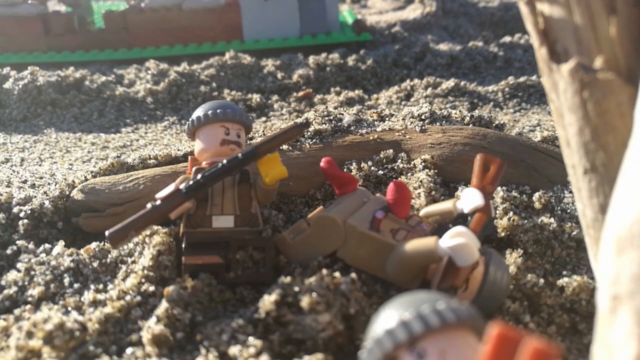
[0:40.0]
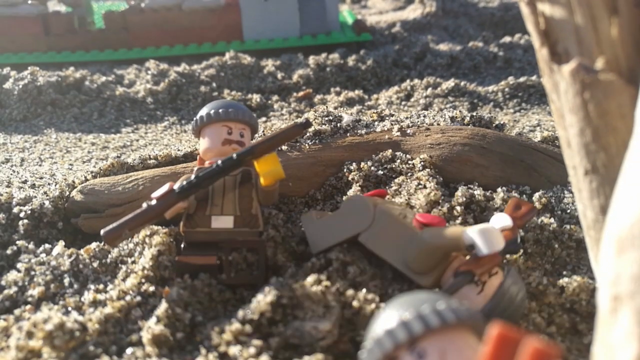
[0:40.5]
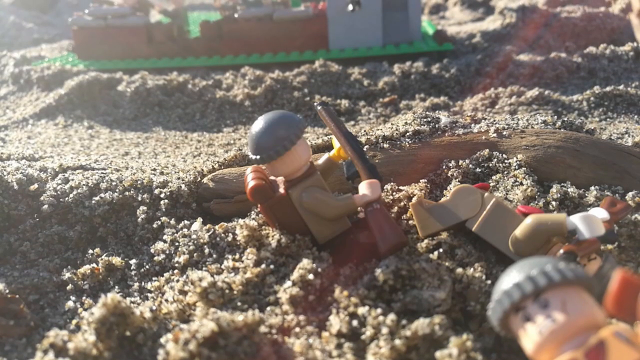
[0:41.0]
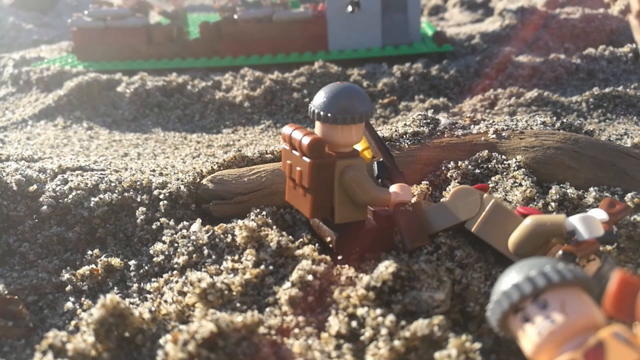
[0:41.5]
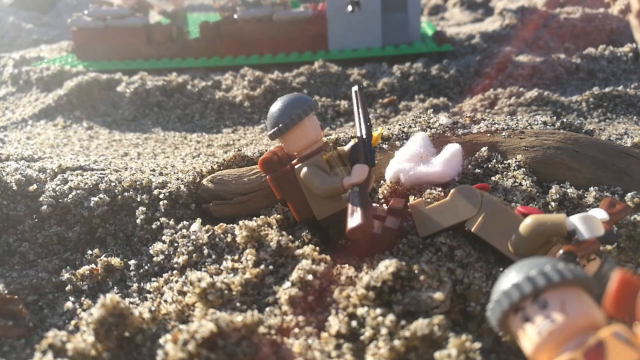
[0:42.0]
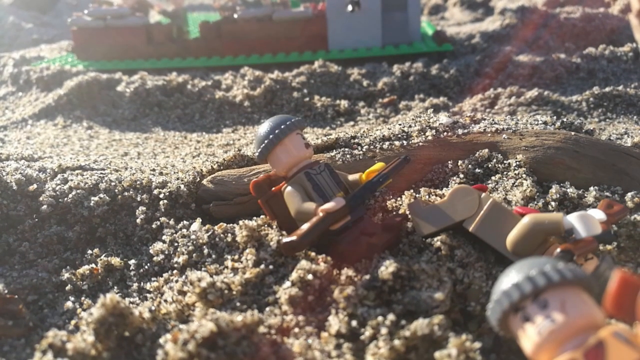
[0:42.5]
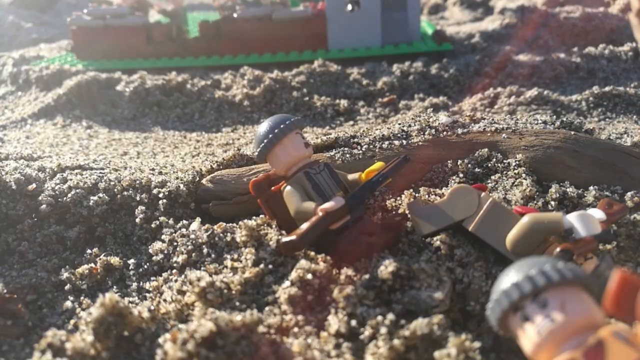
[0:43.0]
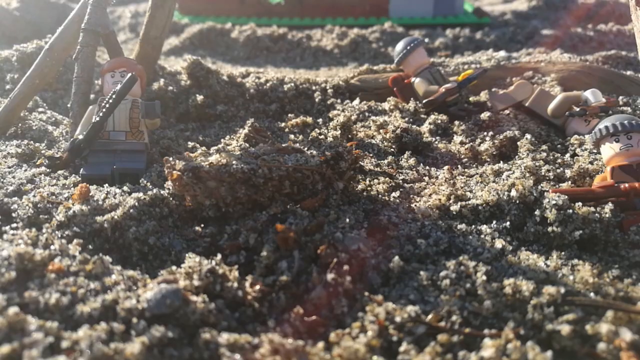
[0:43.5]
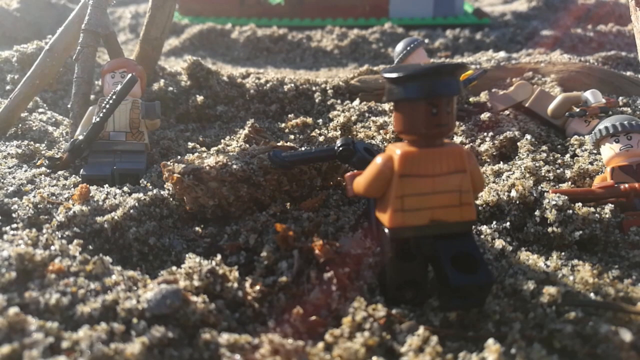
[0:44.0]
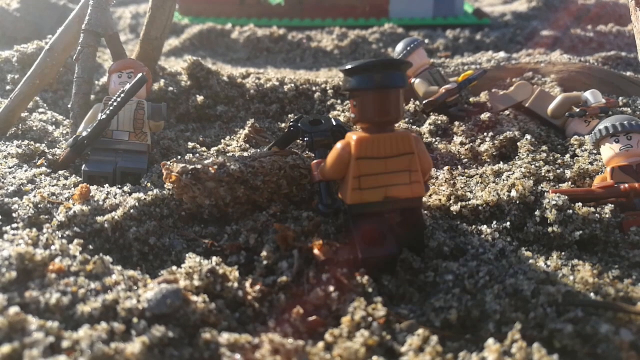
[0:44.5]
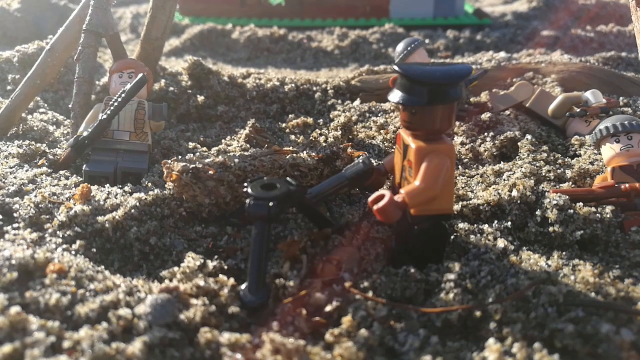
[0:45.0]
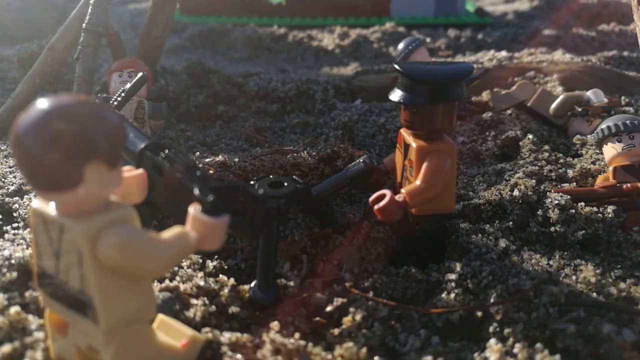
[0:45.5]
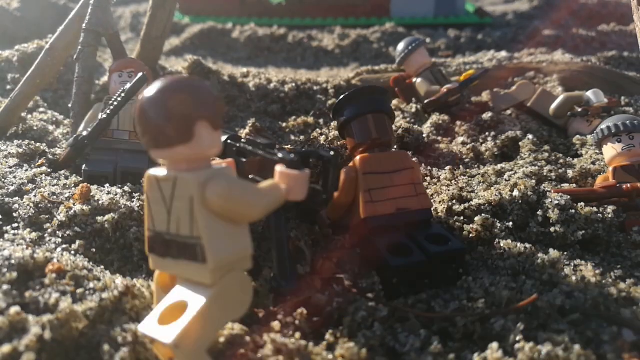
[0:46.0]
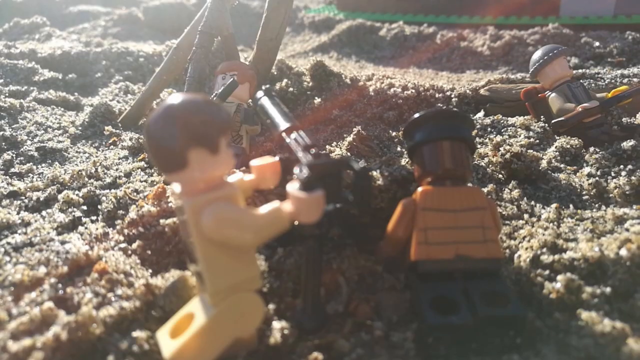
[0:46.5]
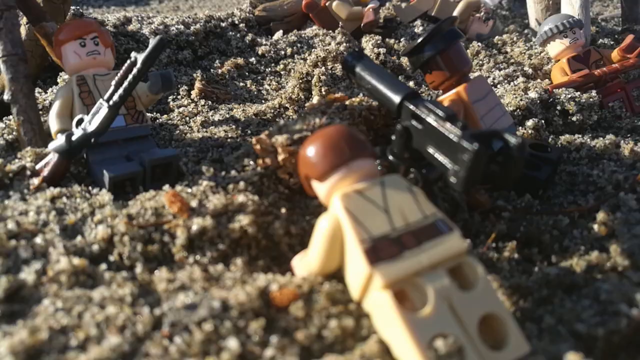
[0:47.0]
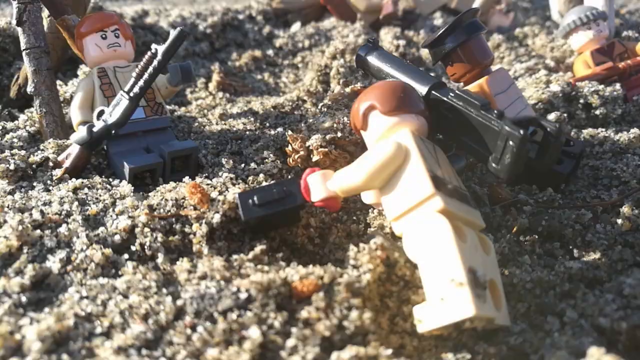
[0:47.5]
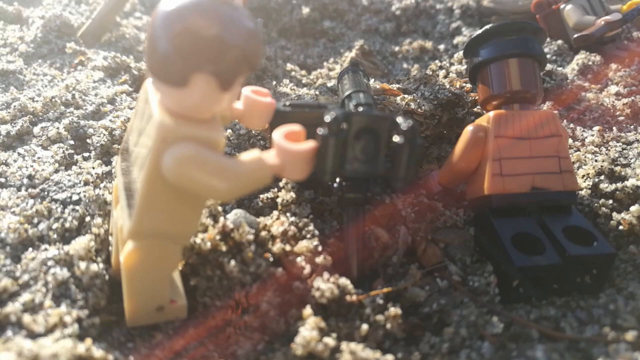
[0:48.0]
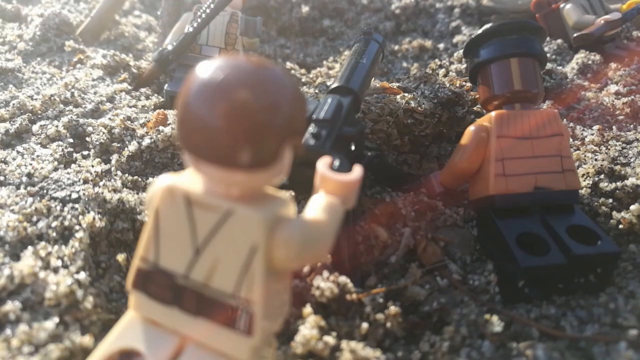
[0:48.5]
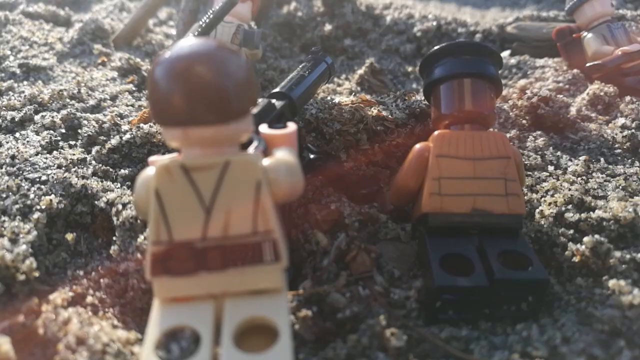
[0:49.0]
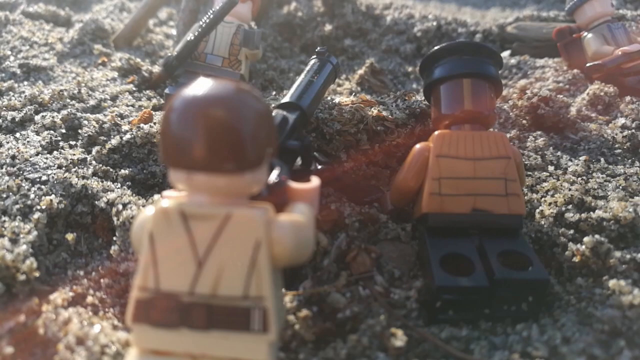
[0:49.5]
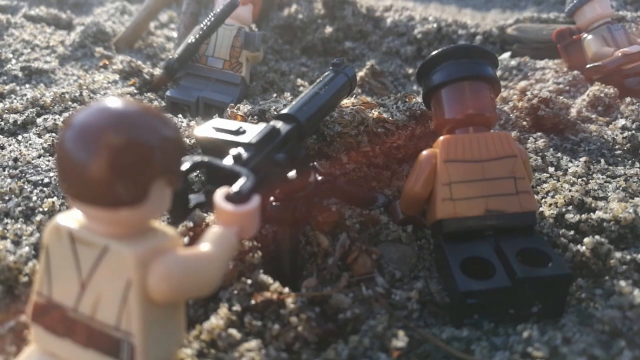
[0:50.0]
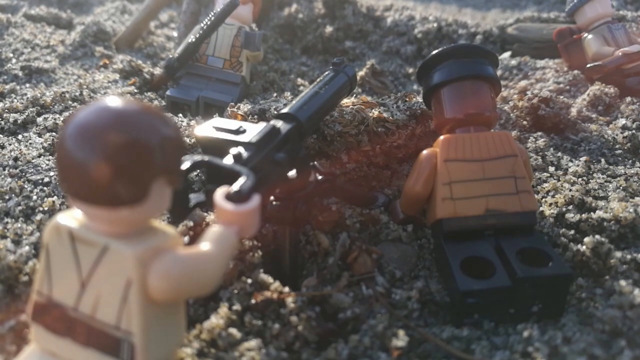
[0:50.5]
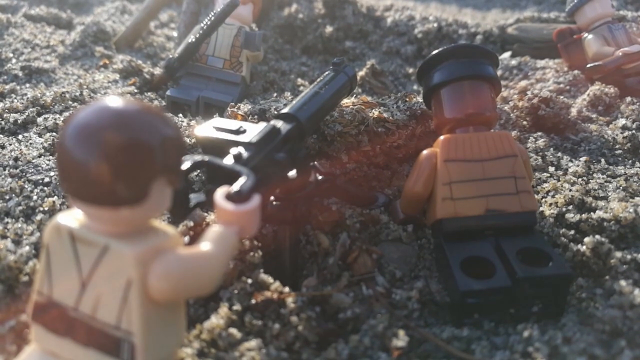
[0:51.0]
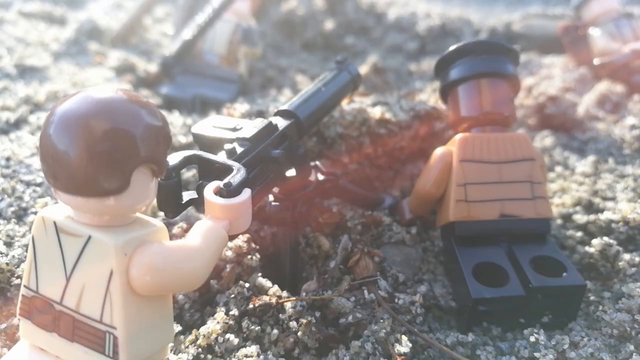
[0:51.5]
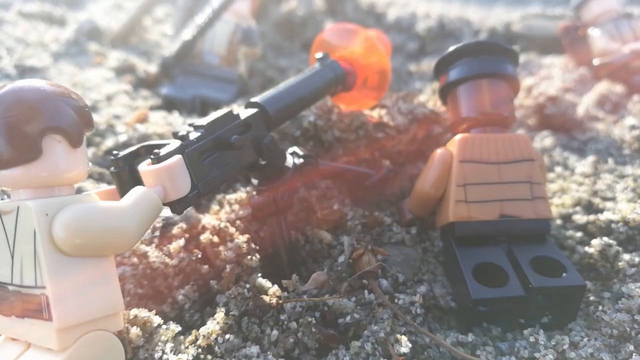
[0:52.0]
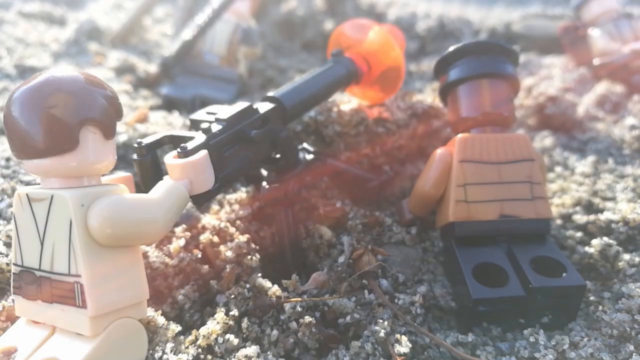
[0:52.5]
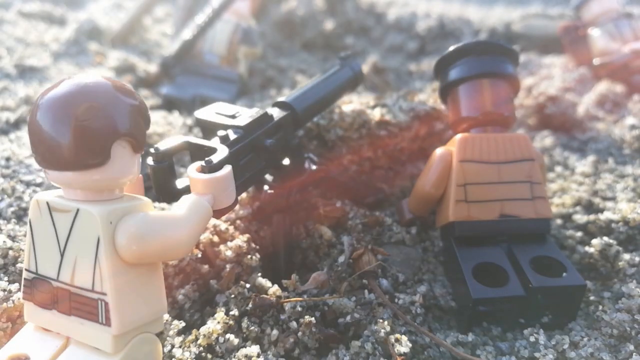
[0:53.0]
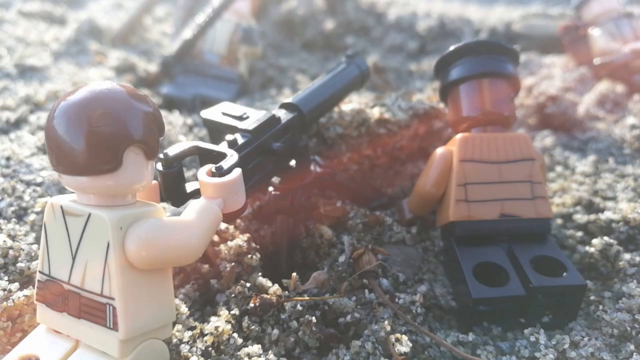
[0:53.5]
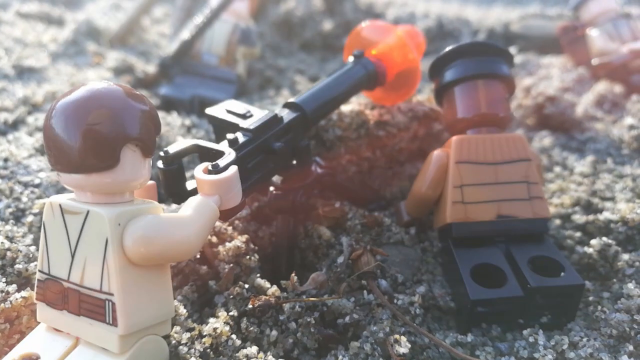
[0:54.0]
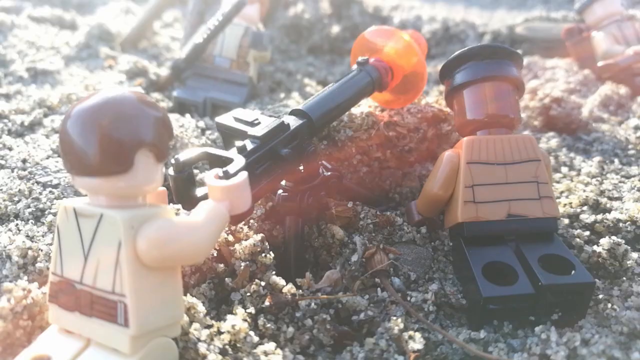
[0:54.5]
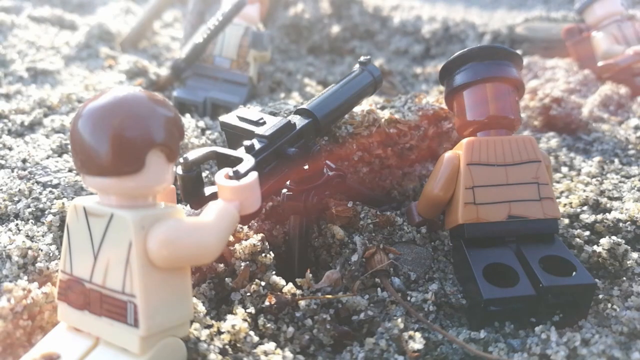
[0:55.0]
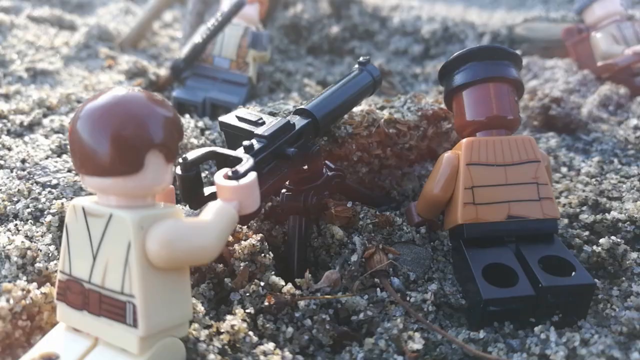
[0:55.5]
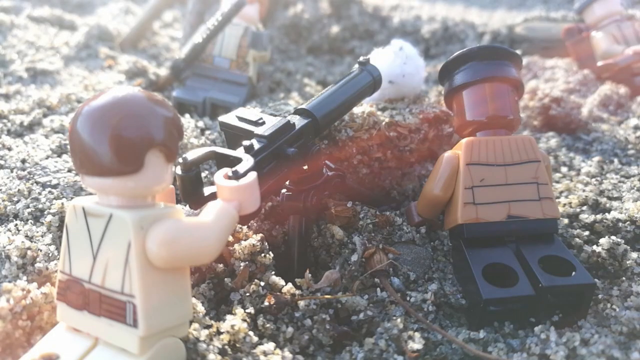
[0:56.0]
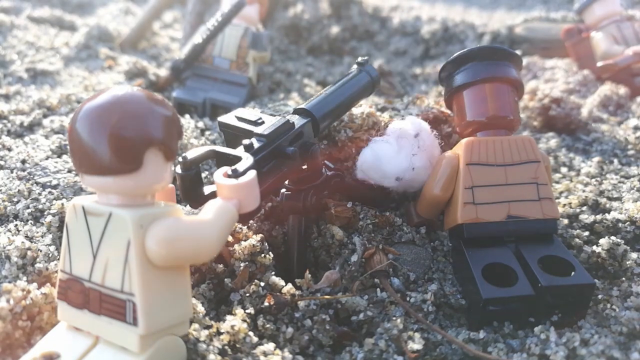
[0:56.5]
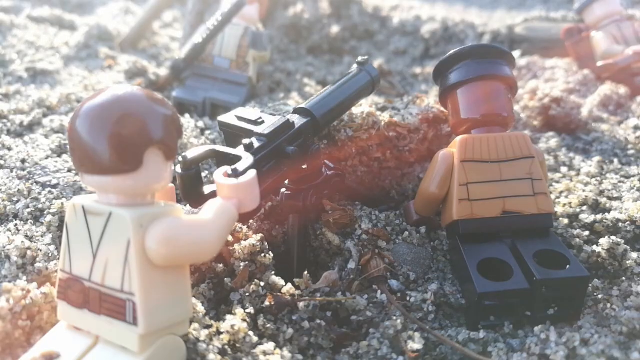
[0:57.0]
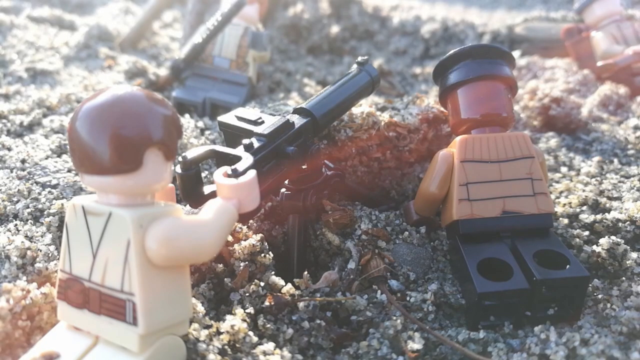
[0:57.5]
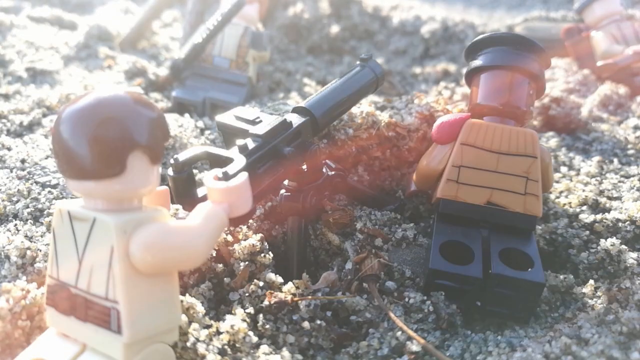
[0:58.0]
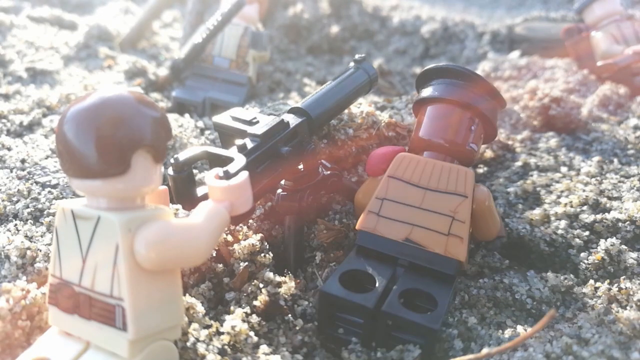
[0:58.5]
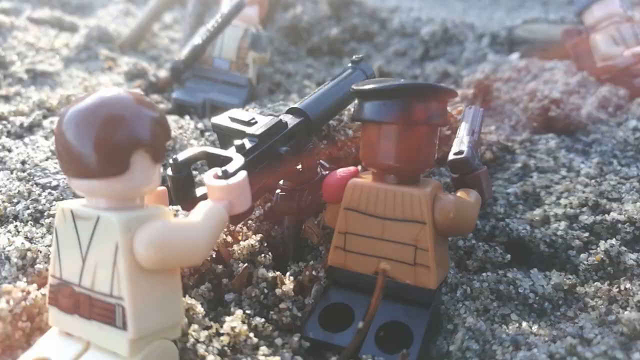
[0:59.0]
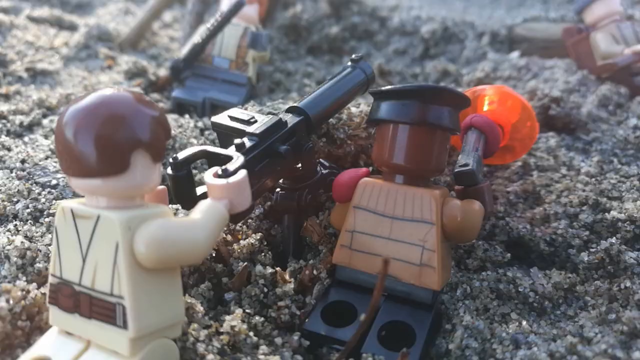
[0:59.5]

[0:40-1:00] Two of the Allied figures are on the sand: one has been shot and lies dead with play-doh blood coming out of him, while his comrade is still alive, sheltering behind a log and firing his rifle up toward the Germans. More little Americans come up, set a machine gun on a tripod and fire away, with big orange special effects coming out of the gun. A figure with what might be a Colt 1911 pistol also fires. The Germans are not shown, and the shot ends with the men at the machine gun firing toward the German bunker.